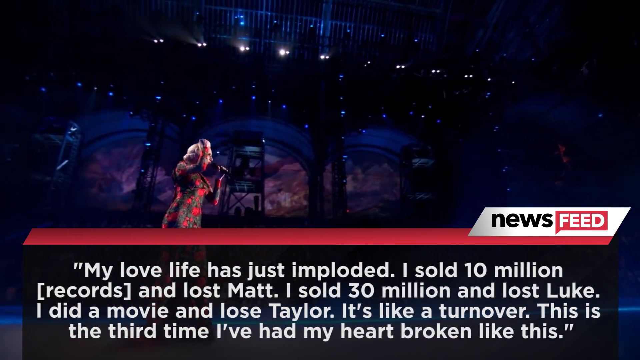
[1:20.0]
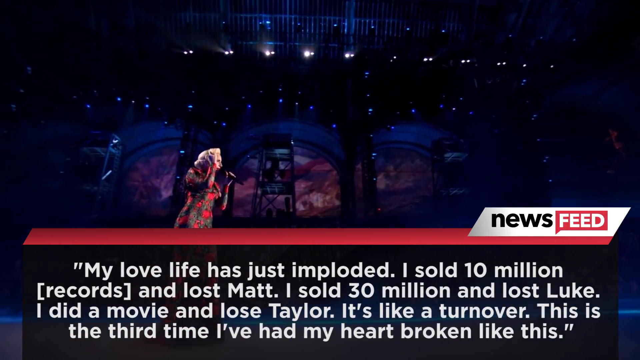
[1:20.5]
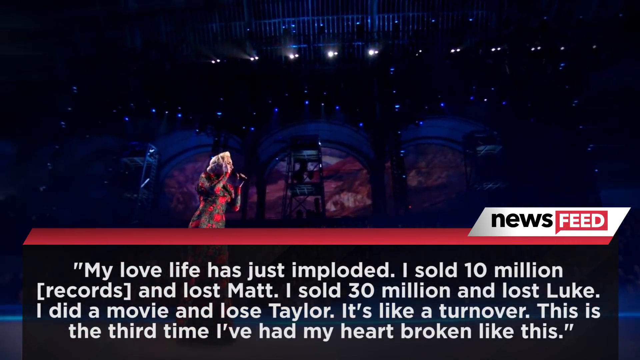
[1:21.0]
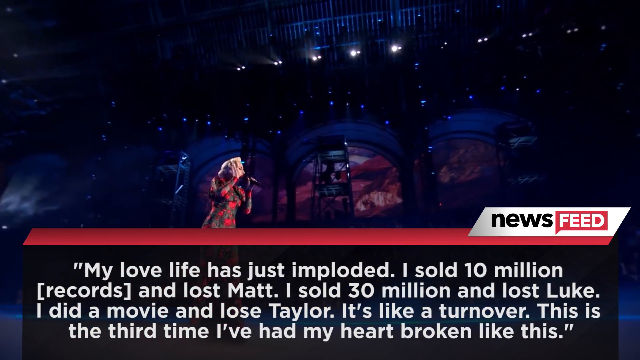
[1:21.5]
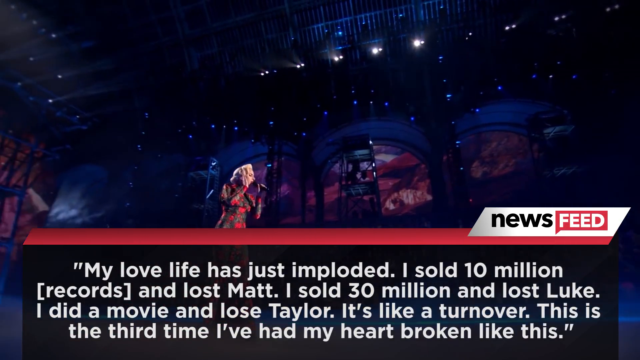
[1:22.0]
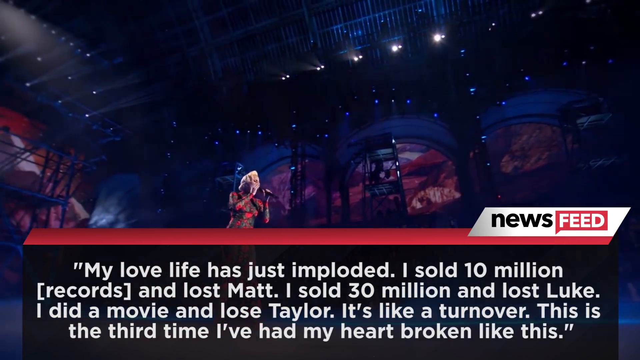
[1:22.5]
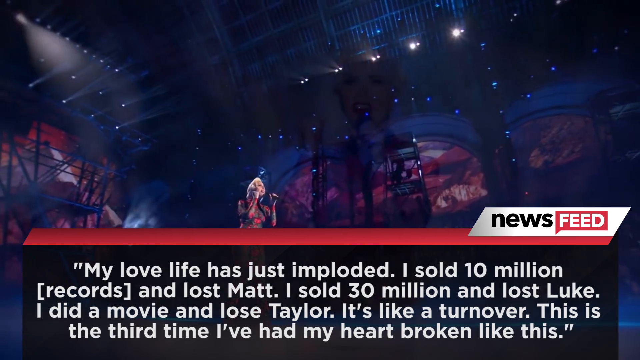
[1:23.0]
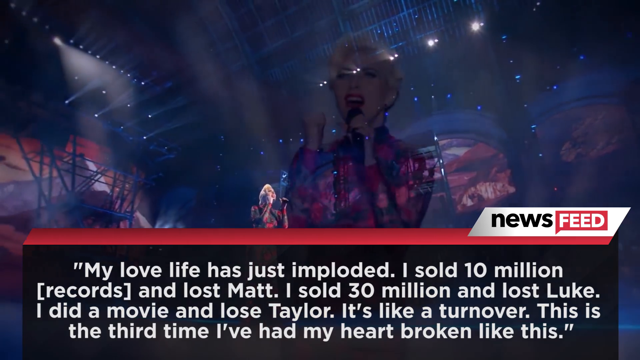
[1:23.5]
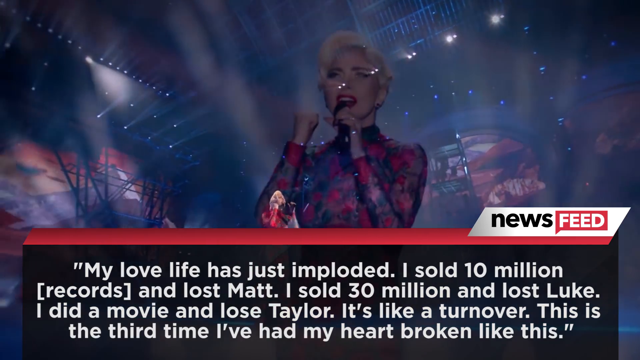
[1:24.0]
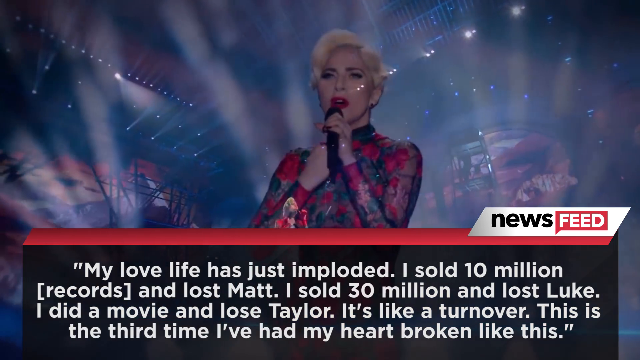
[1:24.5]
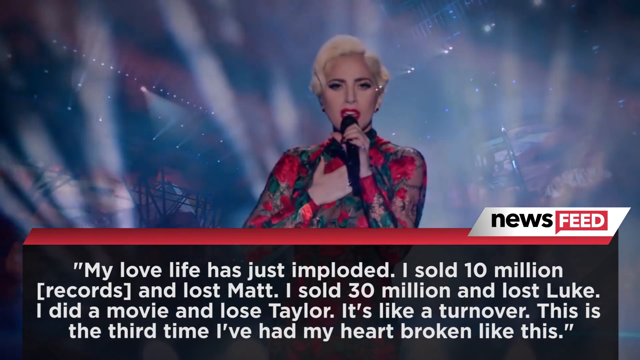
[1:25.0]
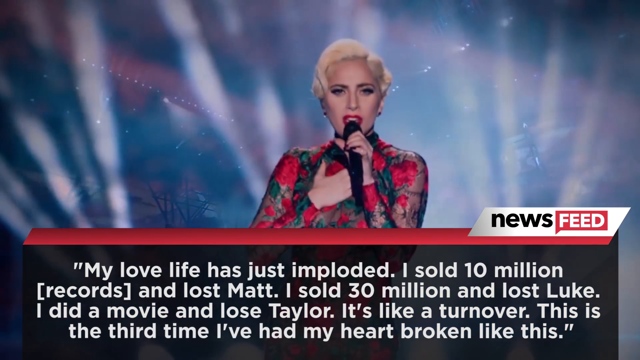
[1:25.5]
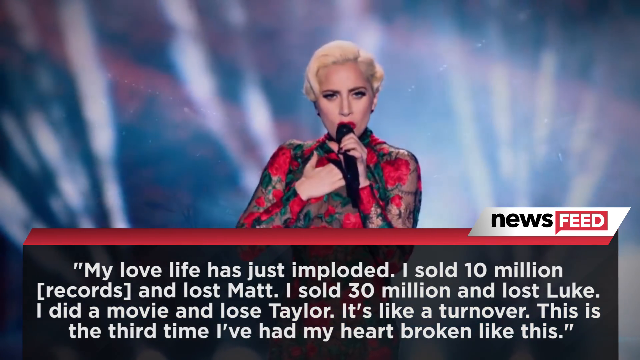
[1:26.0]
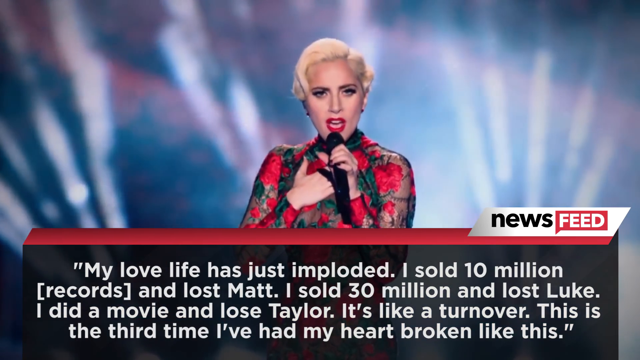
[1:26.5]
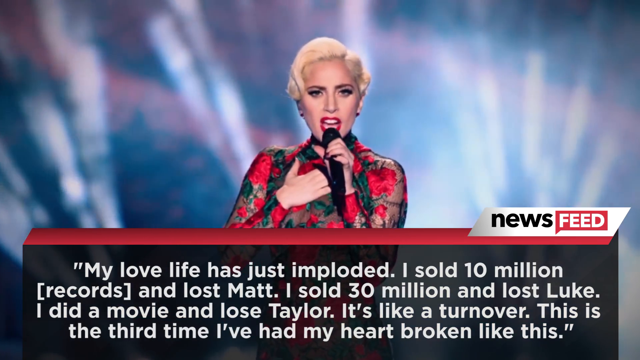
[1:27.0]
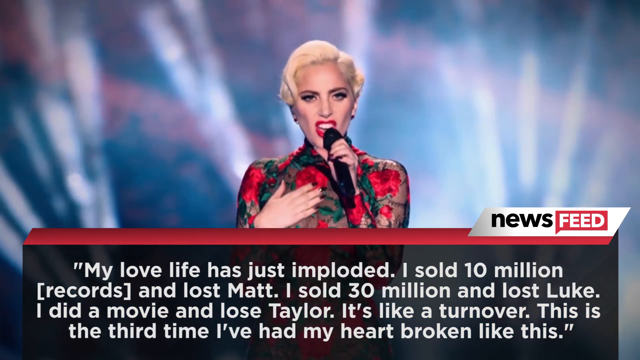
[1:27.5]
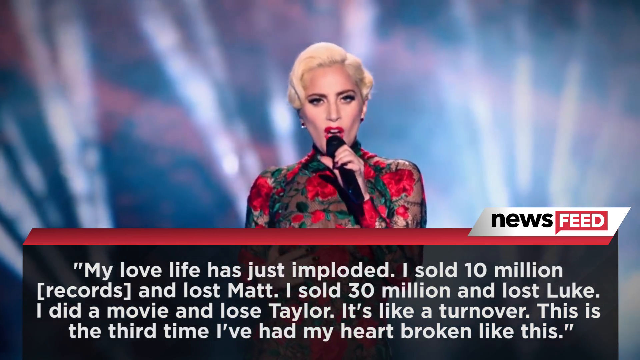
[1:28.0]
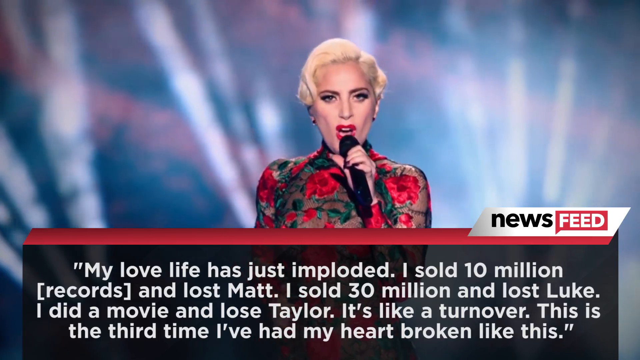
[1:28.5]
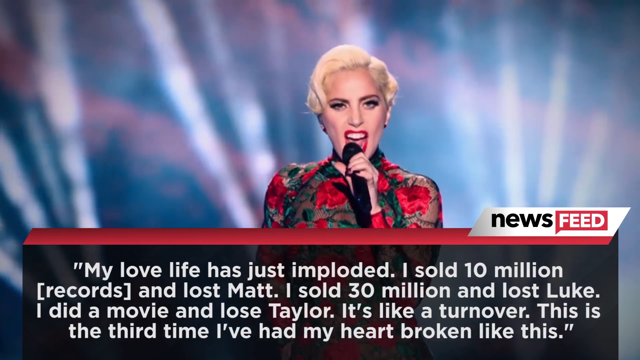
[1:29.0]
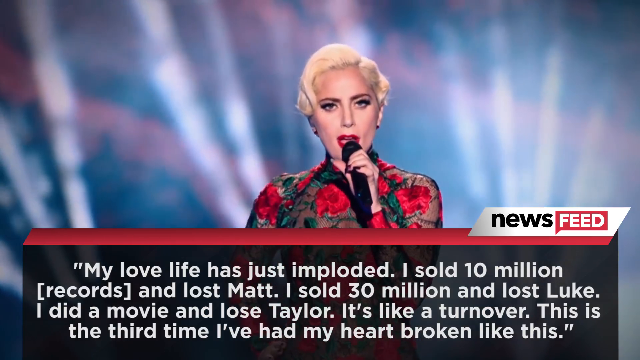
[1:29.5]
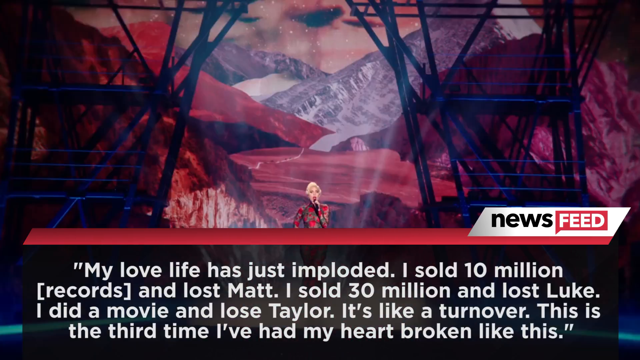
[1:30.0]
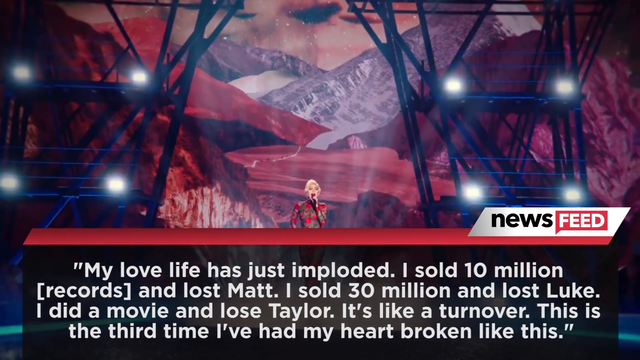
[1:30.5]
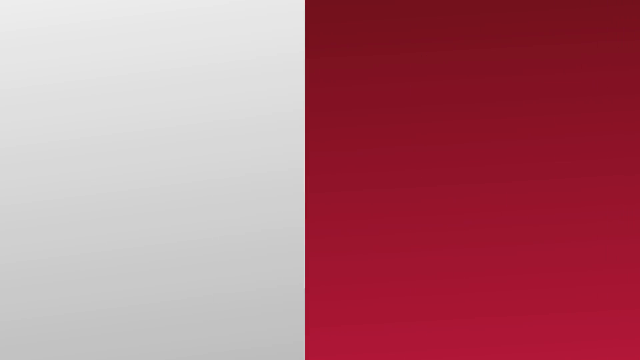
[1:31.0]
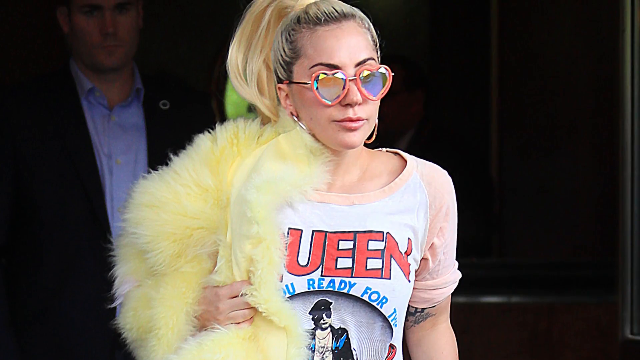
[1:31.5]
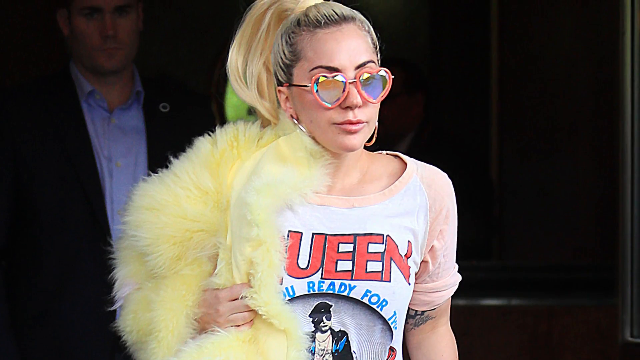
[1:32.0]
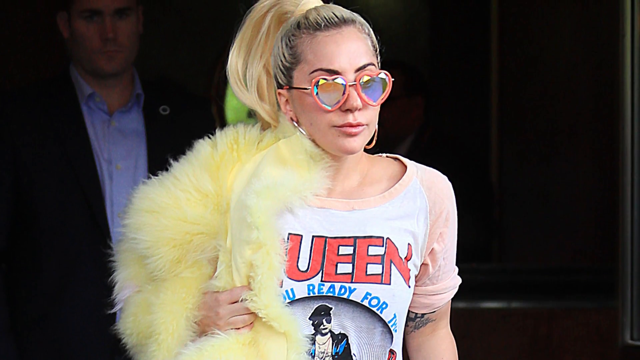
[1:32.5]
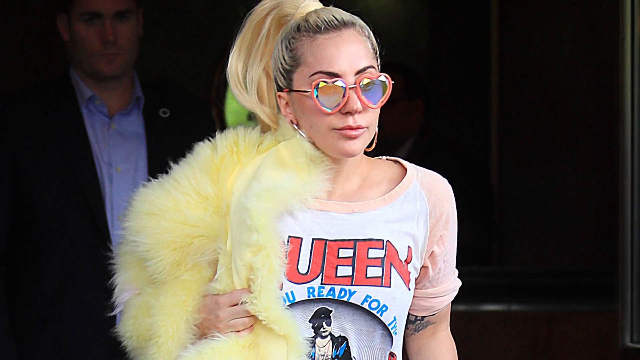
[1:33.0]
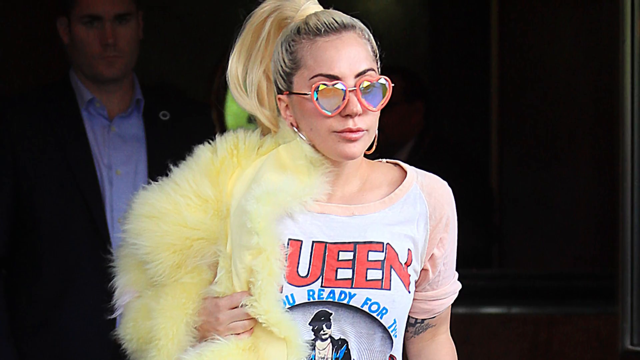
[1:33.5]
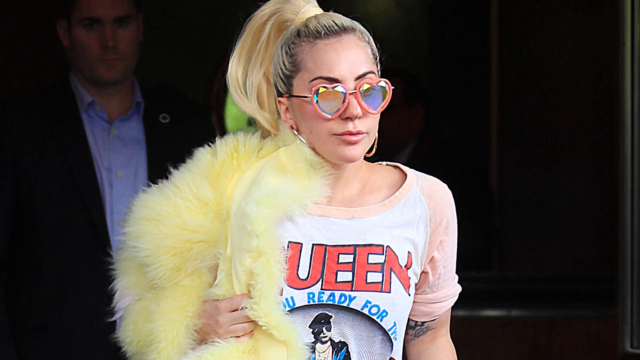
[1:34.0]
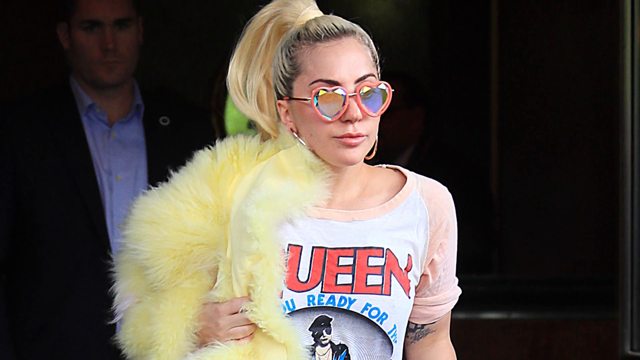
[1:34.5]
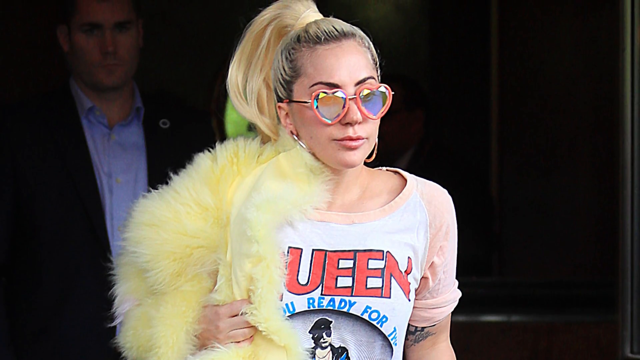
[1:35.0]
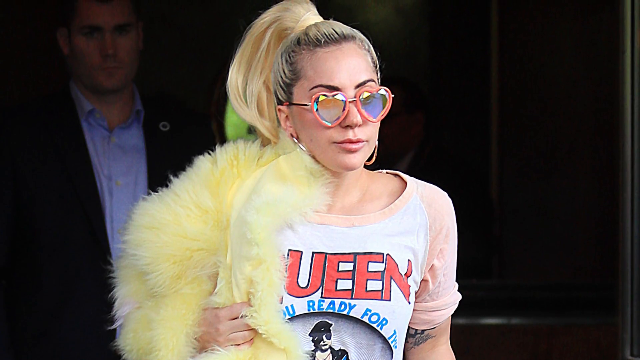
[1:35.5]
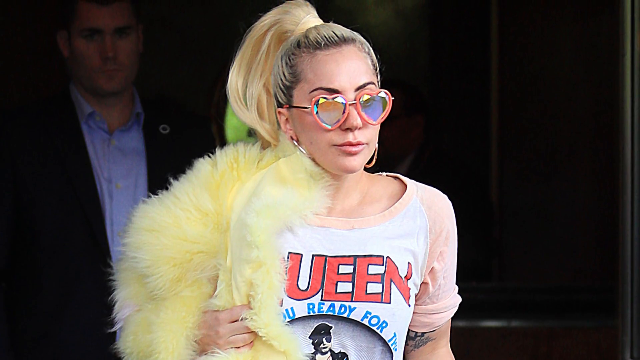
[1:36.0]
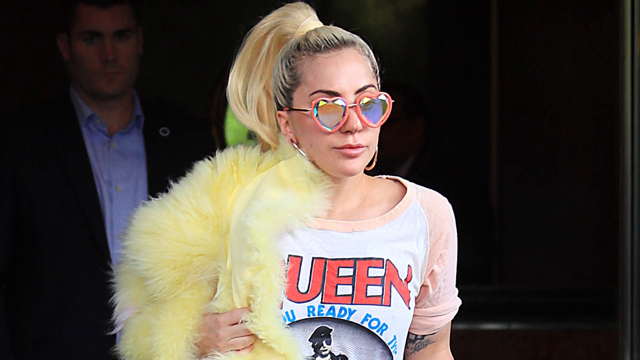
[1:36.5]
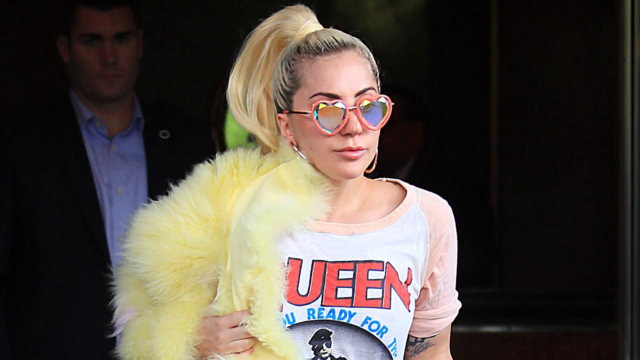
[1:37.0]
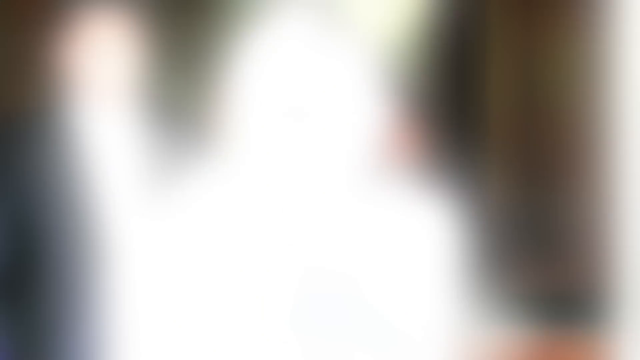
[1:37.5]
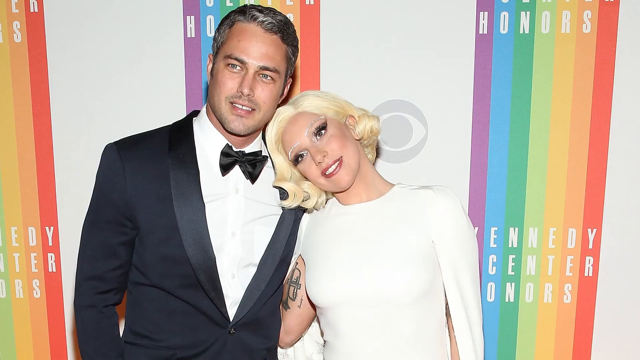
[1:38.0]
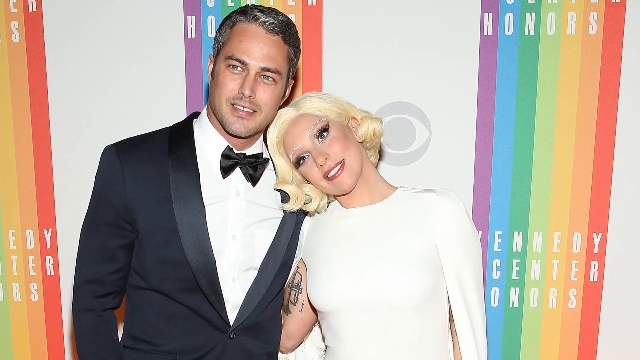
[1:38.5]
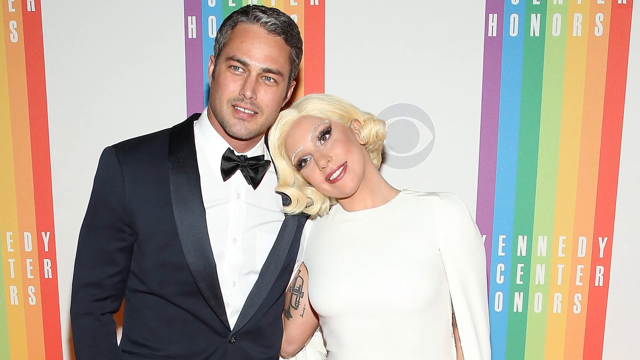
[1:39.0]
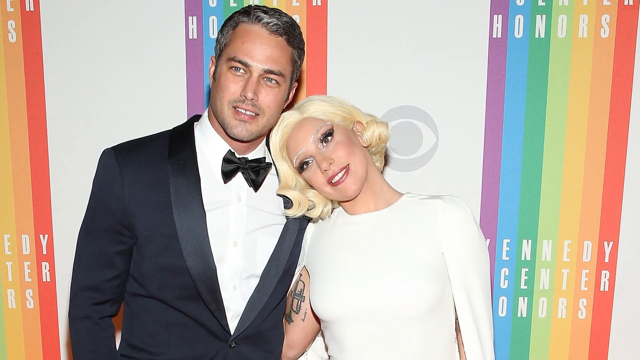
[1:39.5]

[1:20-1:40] Lady Gaga is on stage, singing in front of a very dimly lit stadium. Behind her the walls are blue, and the windows in the building appear very fiery. A very large transparent black banner at the bottom of the video contains white text beginning "My love life was just imploded" and including "This is the third time I've had my heart broken like this." The camera pans around Lady Gaga, then shows her from the front as she sings directly to the camera. The screen then shows Lady Gaga in casual clothes, wearing sunglasses and a shirt that says "Queen".